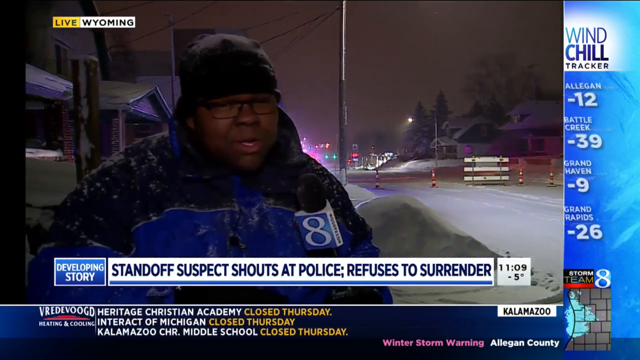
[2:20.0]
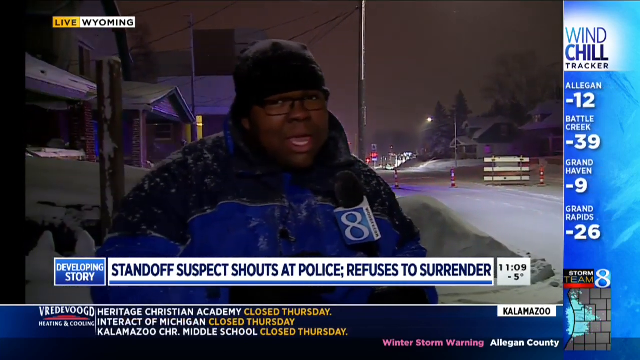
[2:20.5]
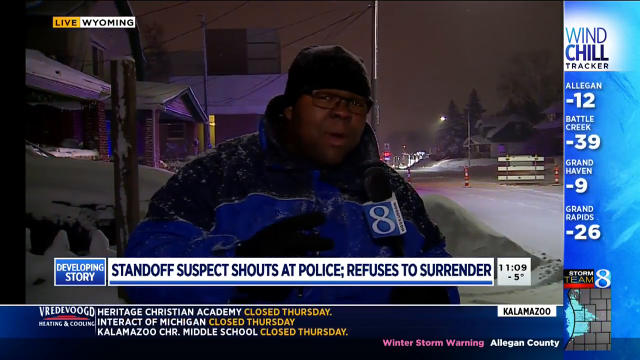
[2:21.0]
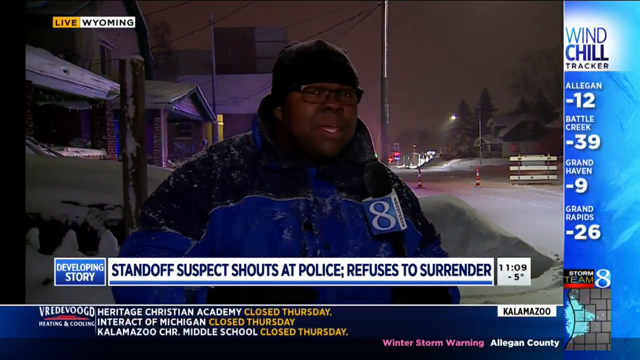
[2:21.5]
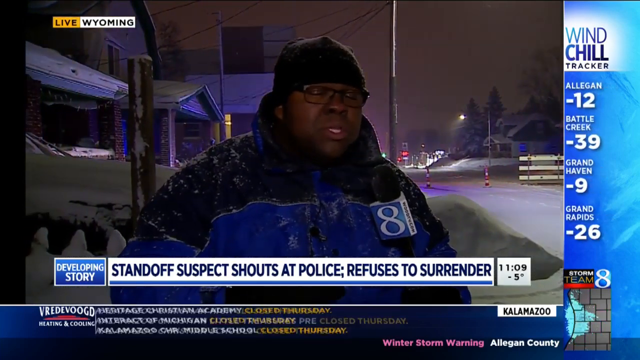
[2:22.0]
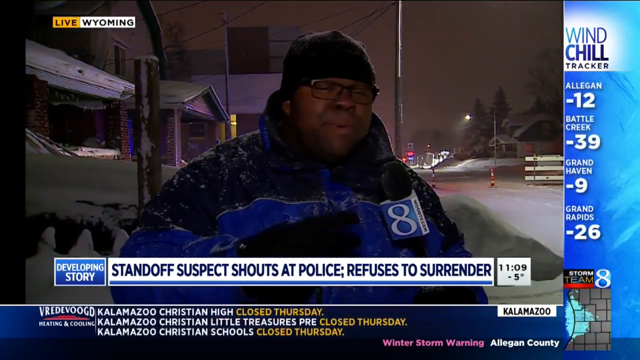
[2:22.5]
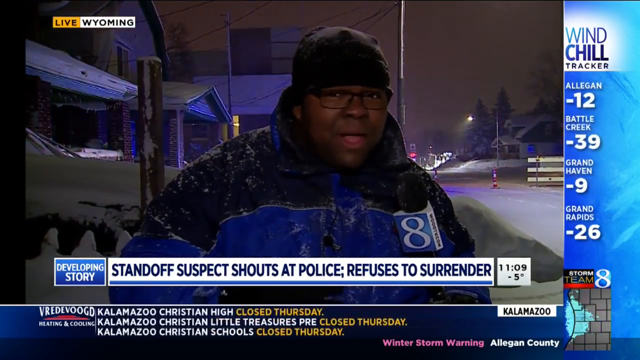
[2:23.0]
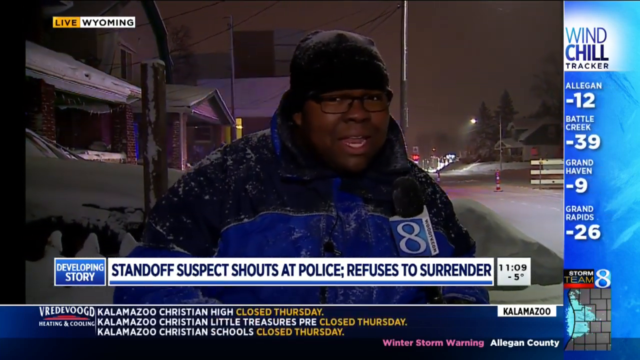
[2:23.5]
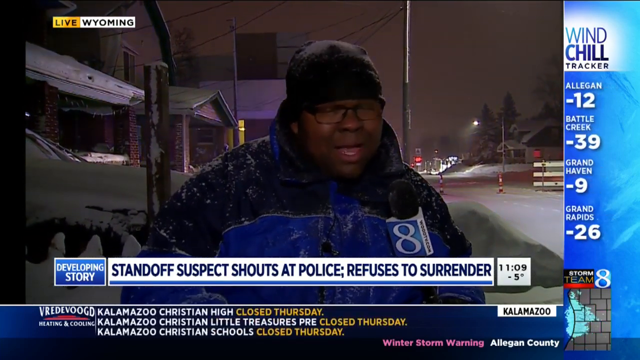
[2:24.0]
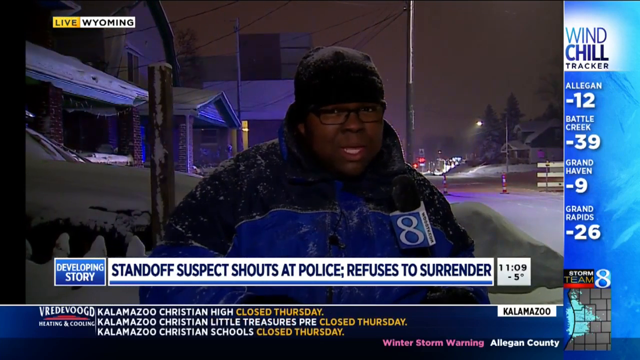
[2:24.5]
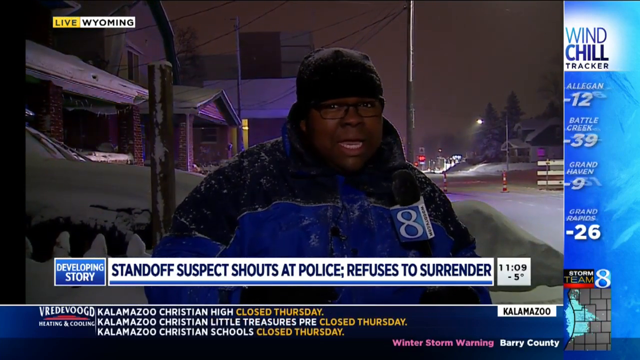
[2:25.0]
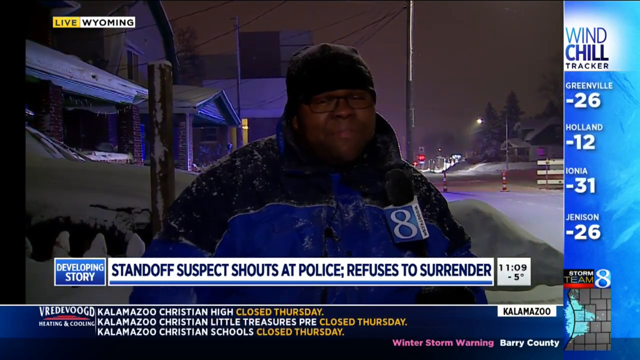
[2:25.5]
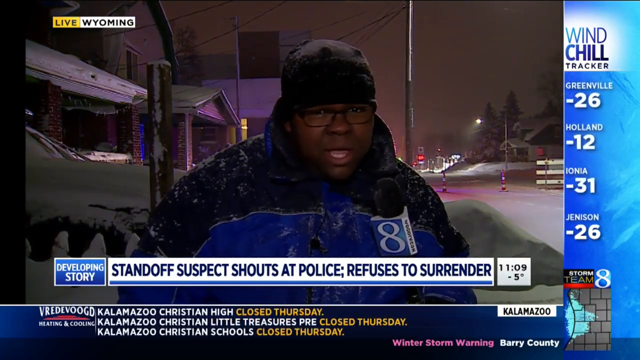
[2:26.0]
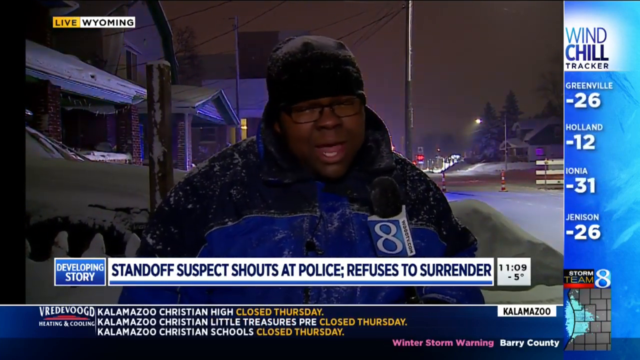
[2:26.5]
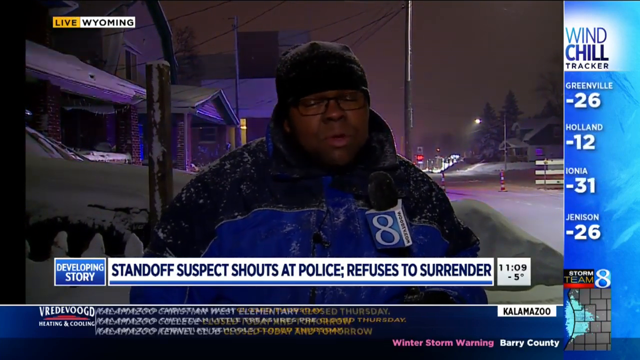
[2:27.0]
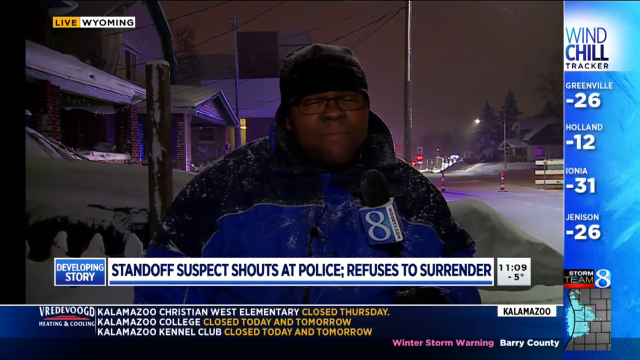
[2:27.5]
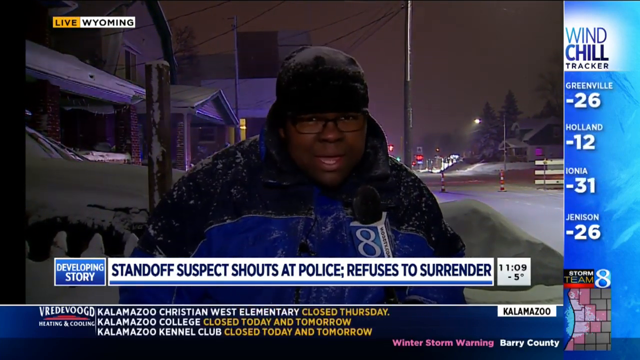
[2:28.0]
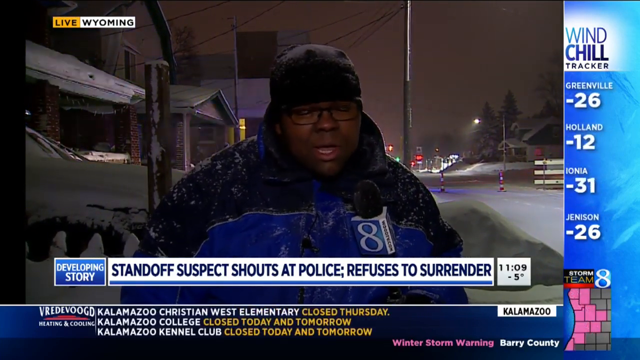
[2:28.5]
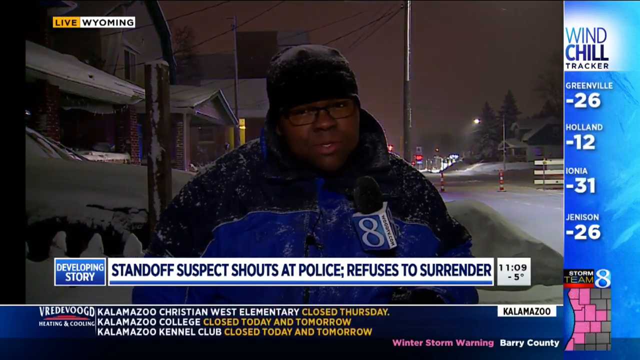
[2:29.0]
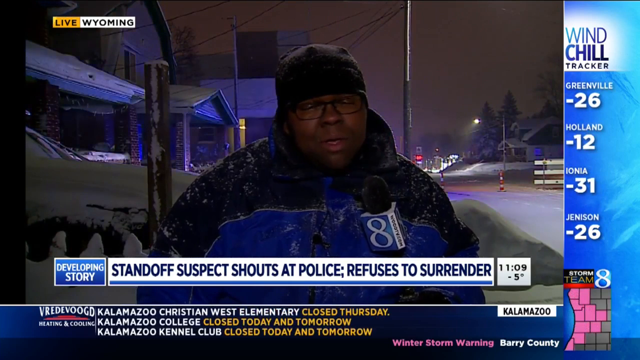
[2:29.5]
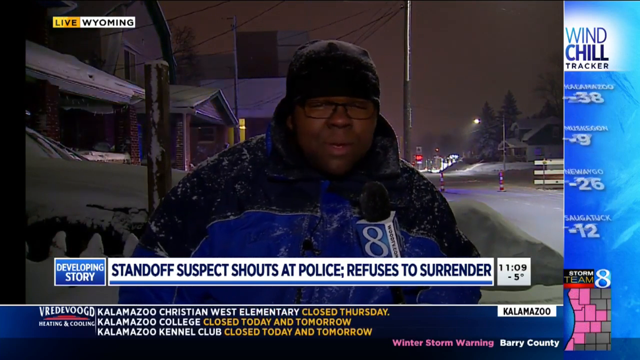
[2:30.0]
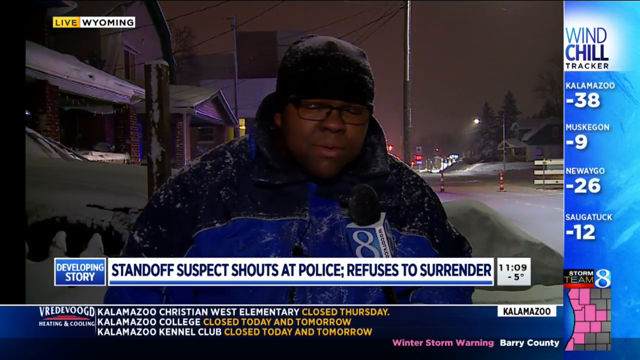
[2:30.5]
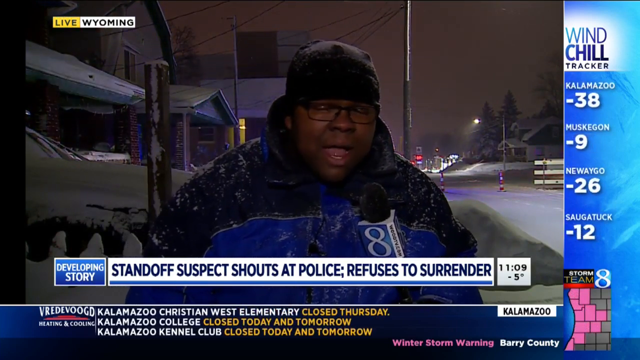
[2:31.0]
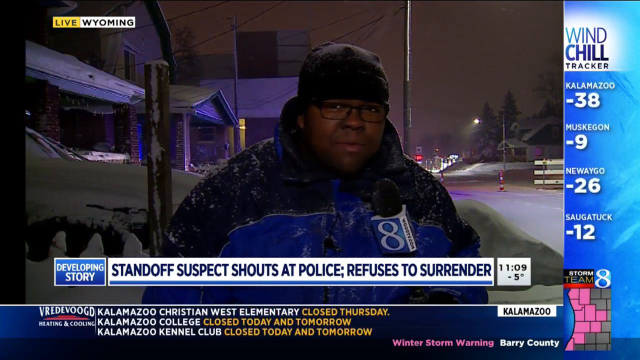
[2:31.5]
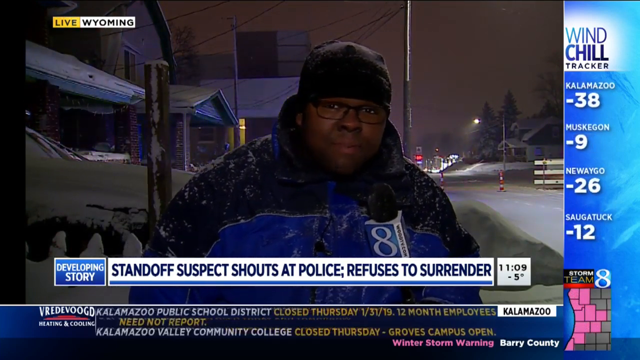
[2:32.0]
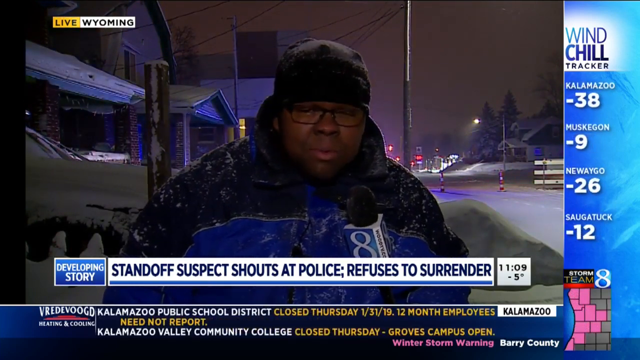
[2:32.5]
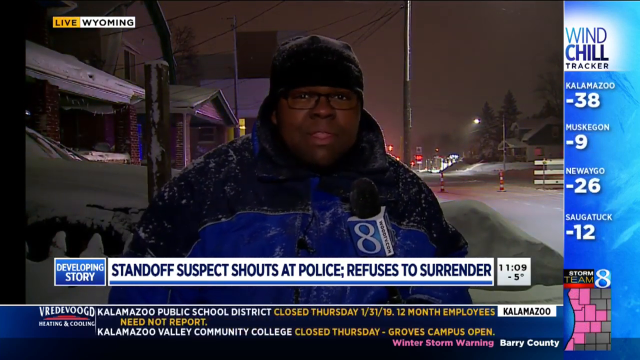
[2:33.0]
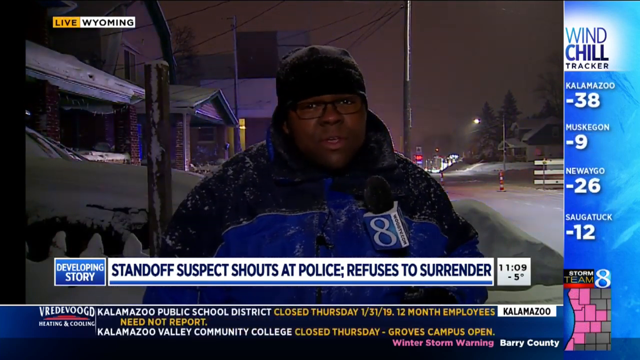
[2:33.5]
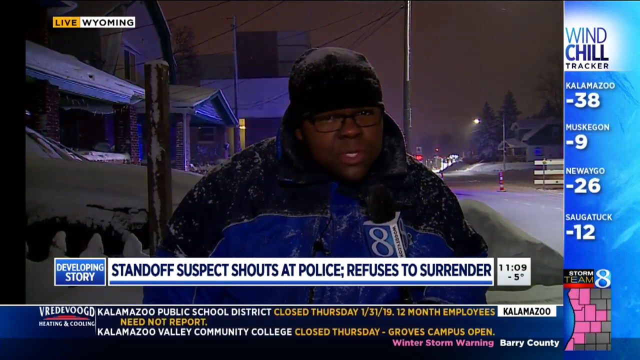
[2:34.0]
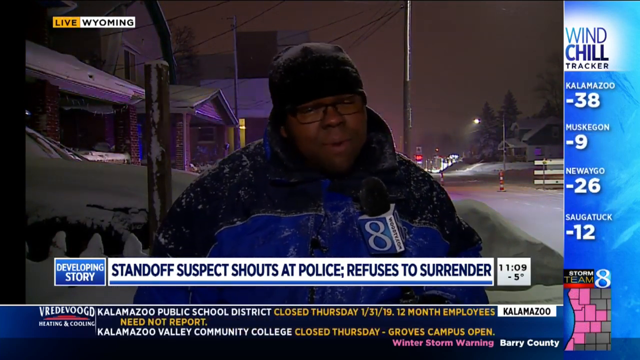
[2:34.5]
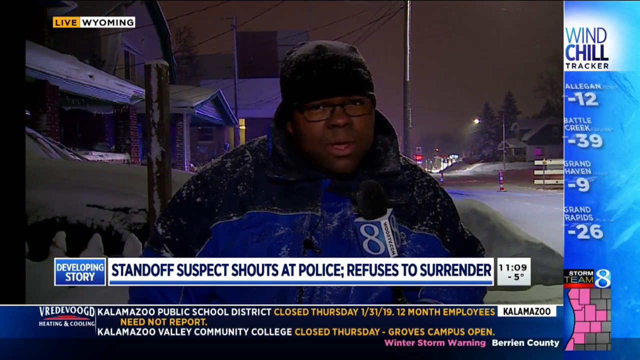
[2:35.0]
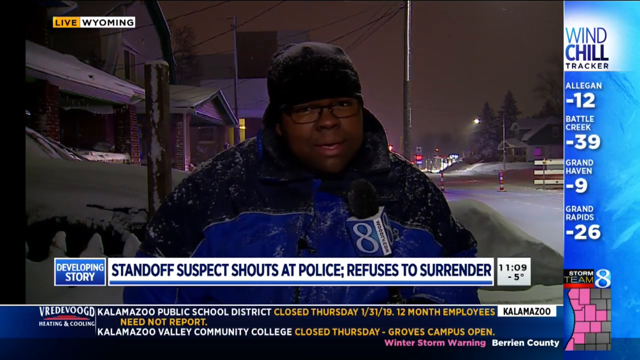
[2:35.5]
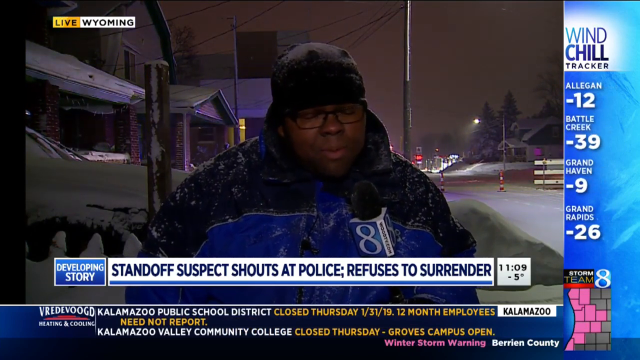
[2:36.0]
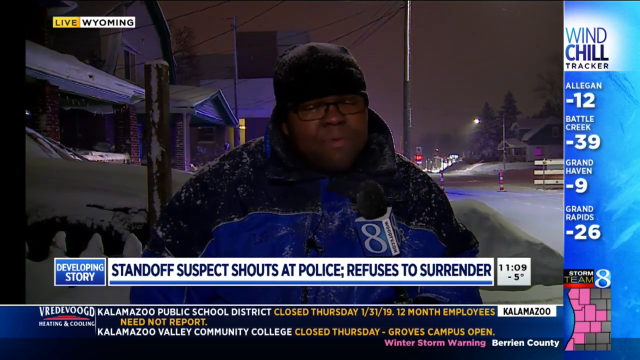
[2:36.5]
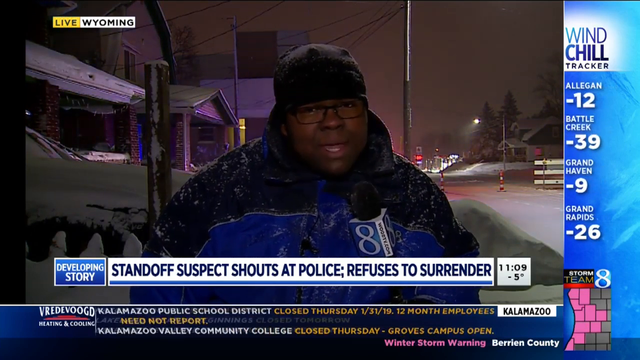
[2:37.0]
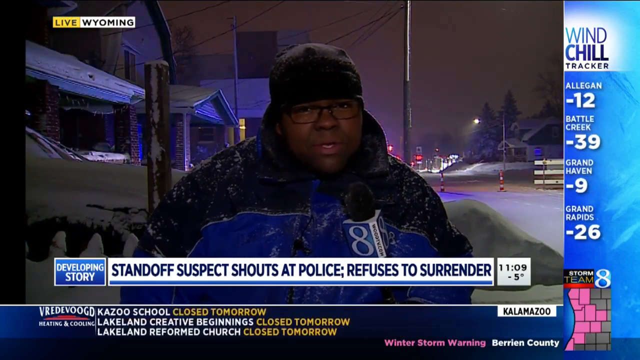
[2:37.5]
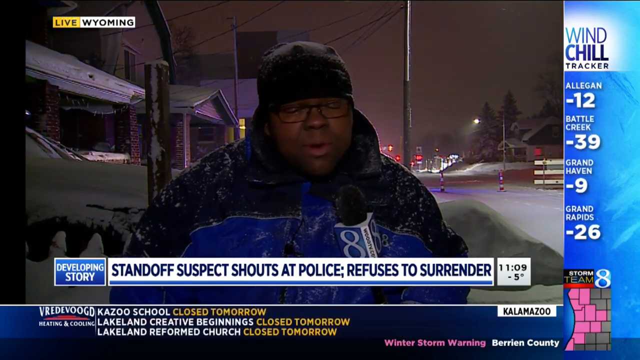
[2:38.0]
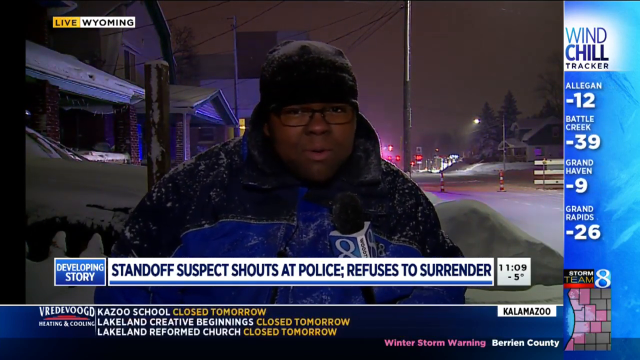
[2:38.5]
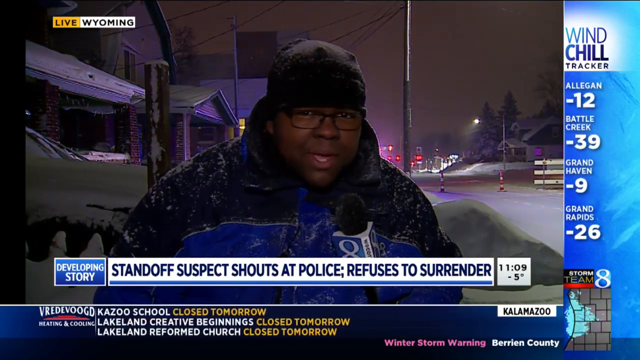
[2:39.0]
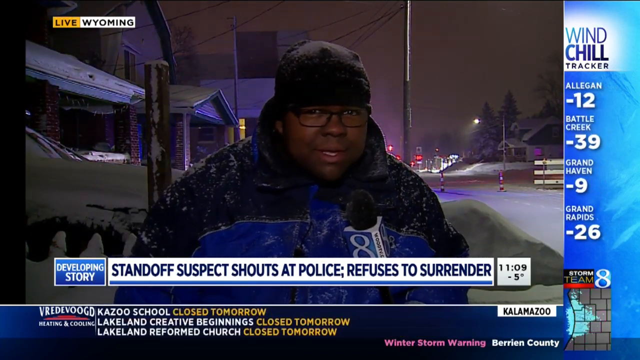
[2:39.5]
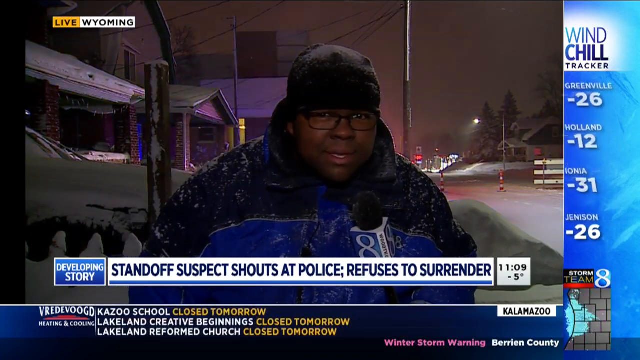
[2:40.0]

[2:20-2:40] The correspondent speaks under the same headline about the suspect who "shouts the police refuses to surrender." More information appears about schools and colleges closing for tomorrow and Thursday. The correspondent looks steadily at the camera, face forward, with a mostly neutral look. Other houses, flashing police lights and the pole are still visible, and a car that looks completely covered in snow is not far from him. Sleet is still visible on his jacket, and the towns on the wind chill tracker keep changing, including Battle Creek and Greenville.